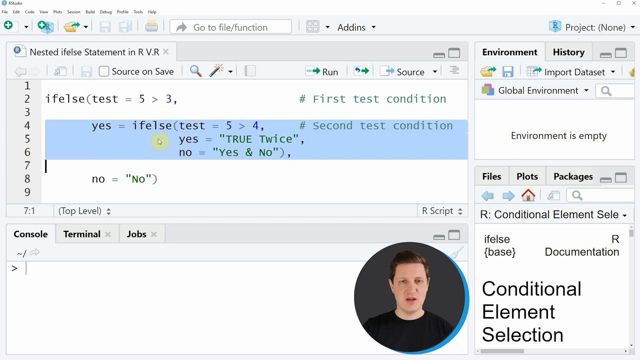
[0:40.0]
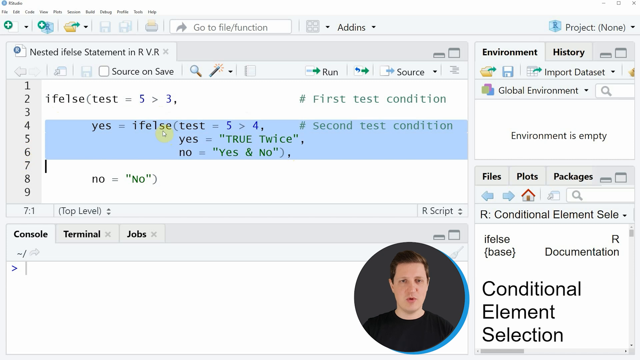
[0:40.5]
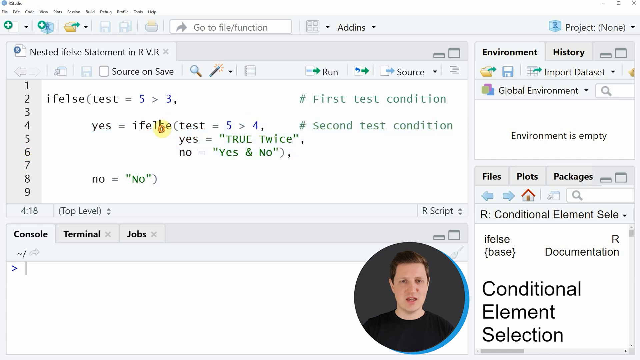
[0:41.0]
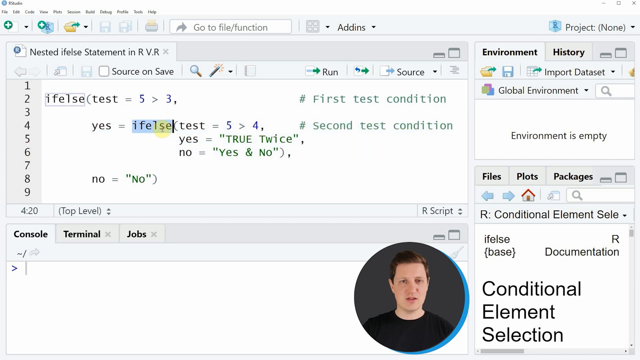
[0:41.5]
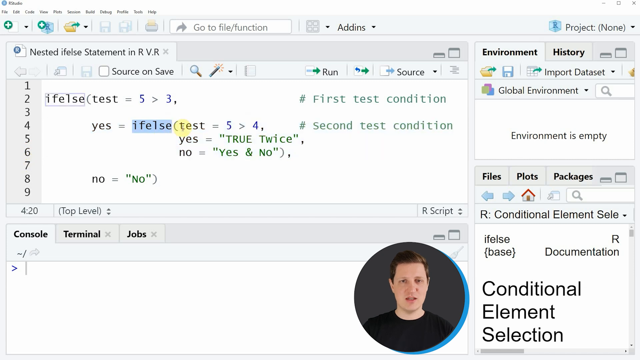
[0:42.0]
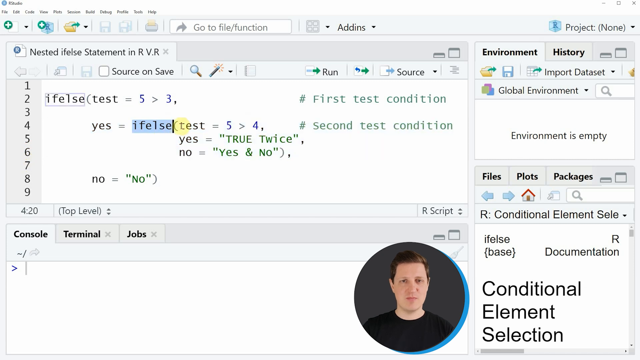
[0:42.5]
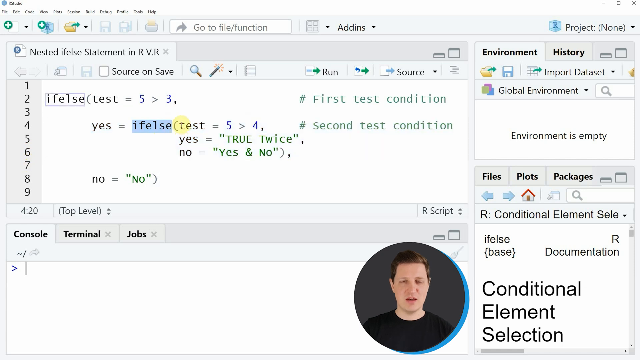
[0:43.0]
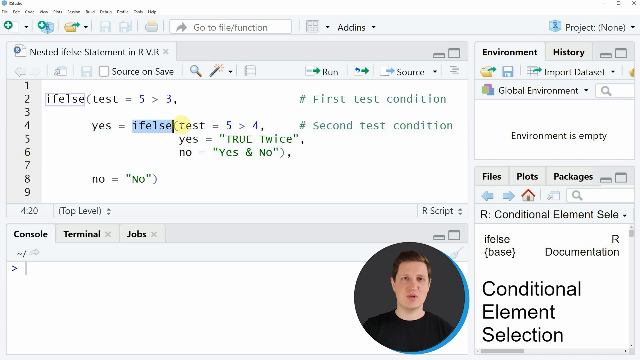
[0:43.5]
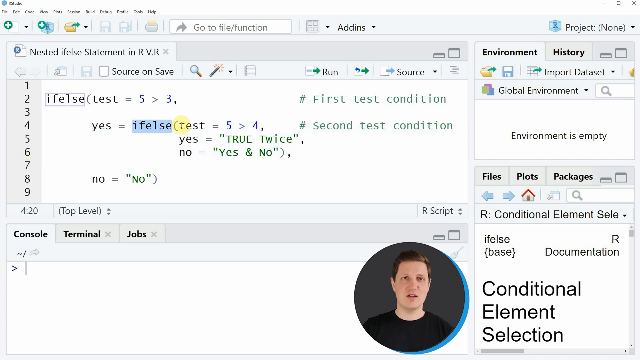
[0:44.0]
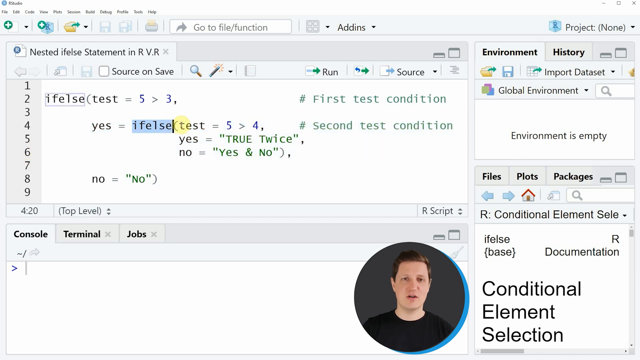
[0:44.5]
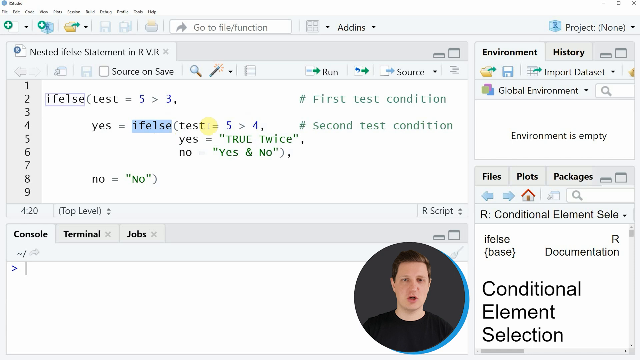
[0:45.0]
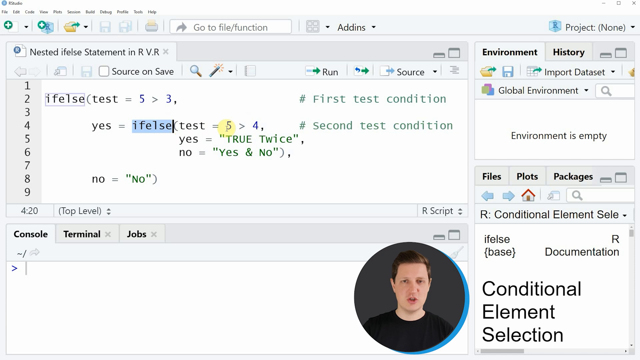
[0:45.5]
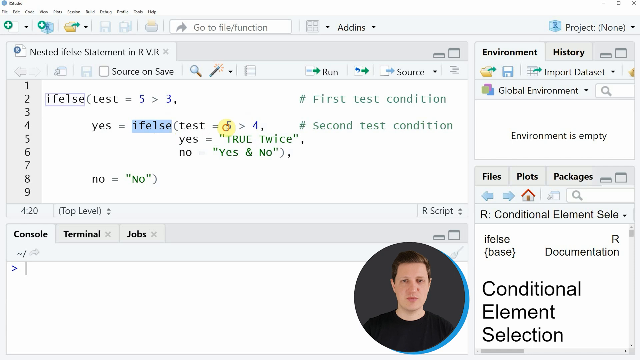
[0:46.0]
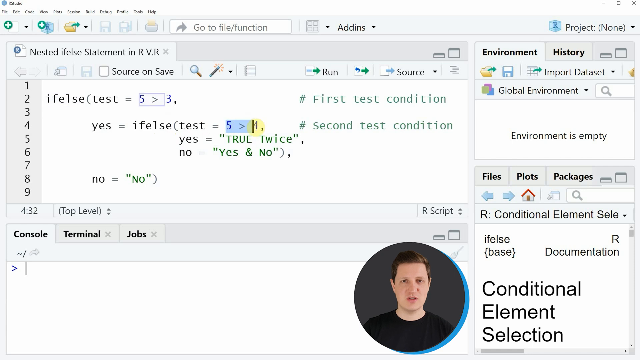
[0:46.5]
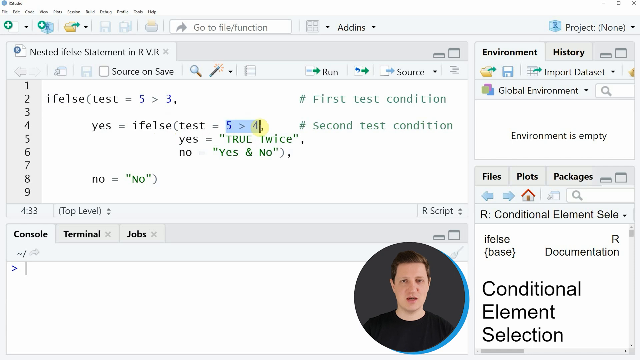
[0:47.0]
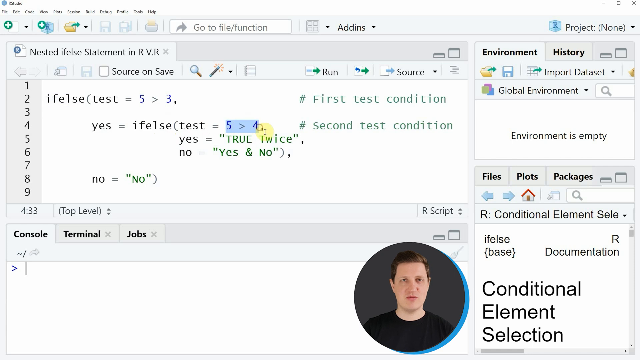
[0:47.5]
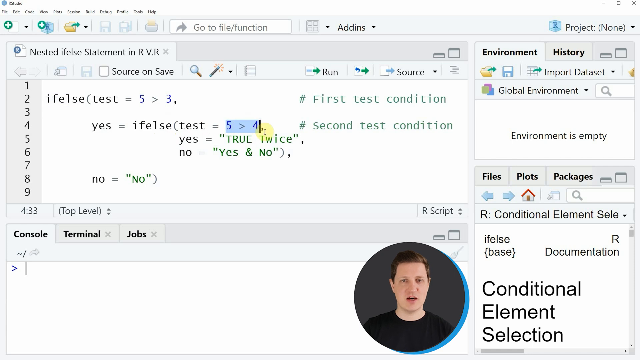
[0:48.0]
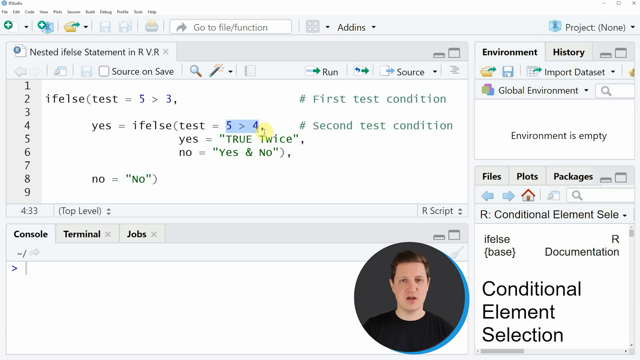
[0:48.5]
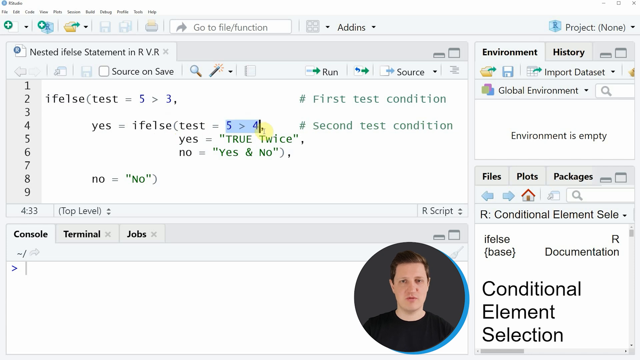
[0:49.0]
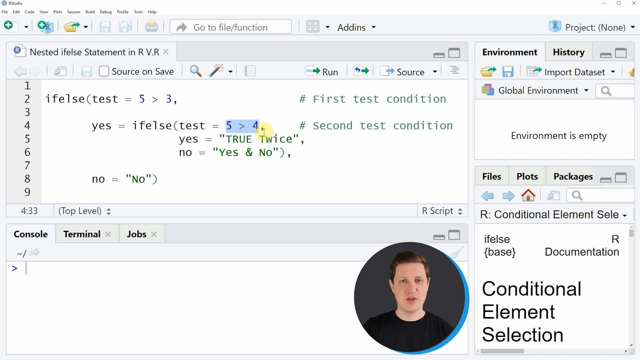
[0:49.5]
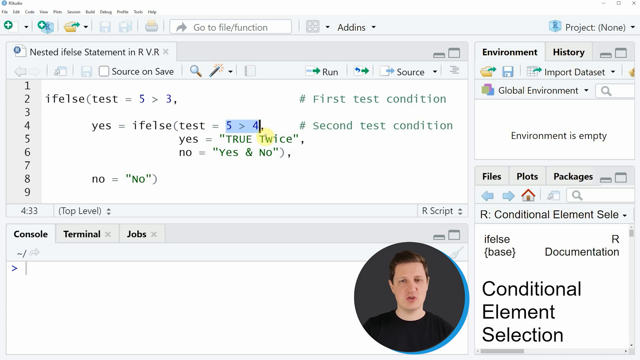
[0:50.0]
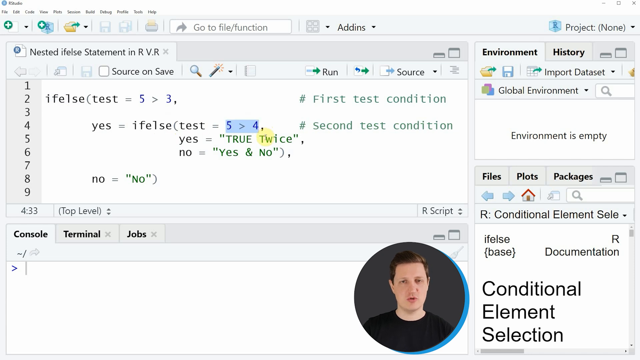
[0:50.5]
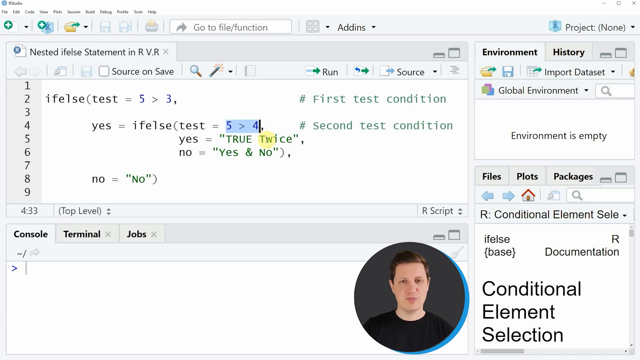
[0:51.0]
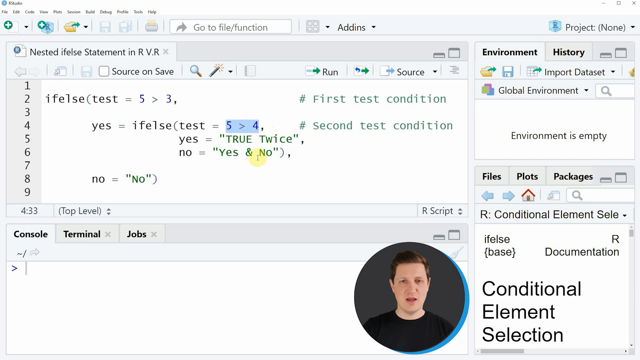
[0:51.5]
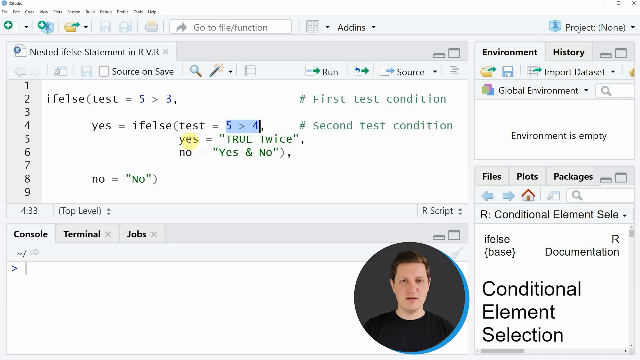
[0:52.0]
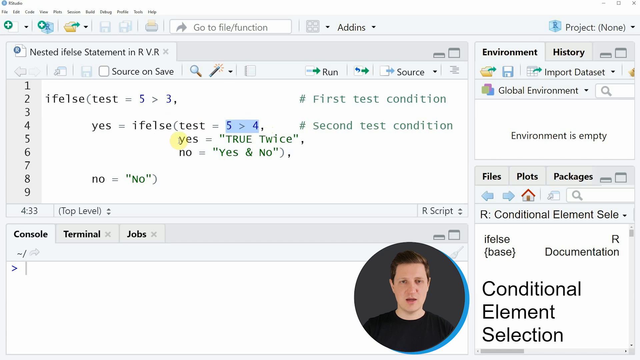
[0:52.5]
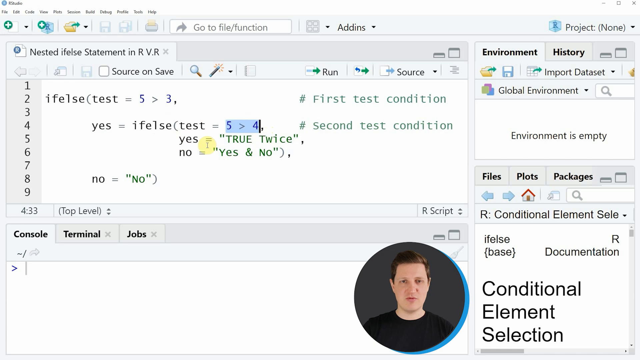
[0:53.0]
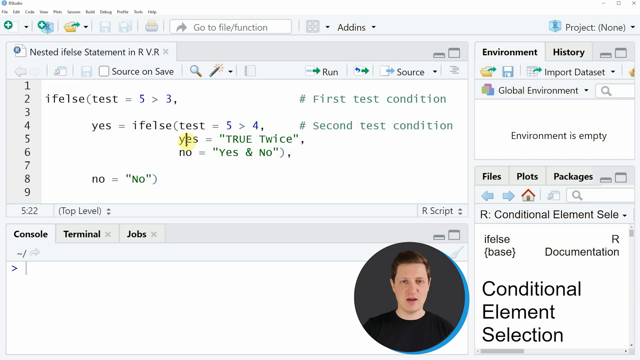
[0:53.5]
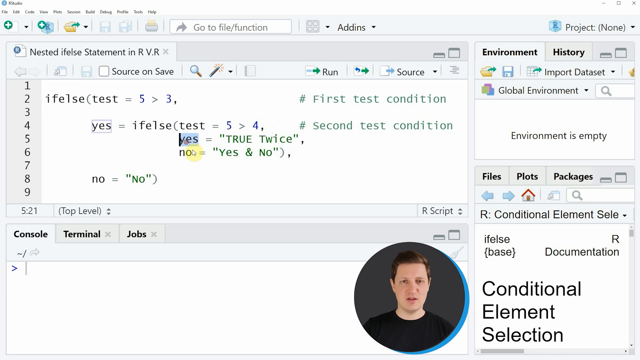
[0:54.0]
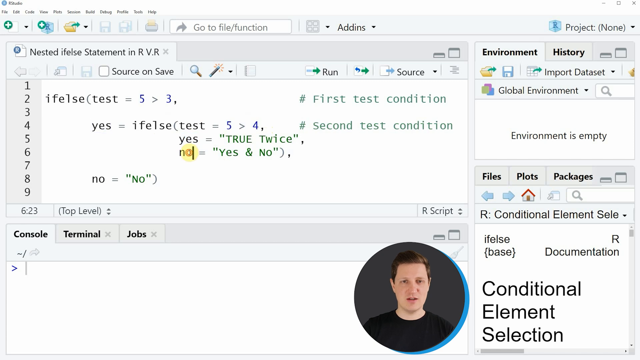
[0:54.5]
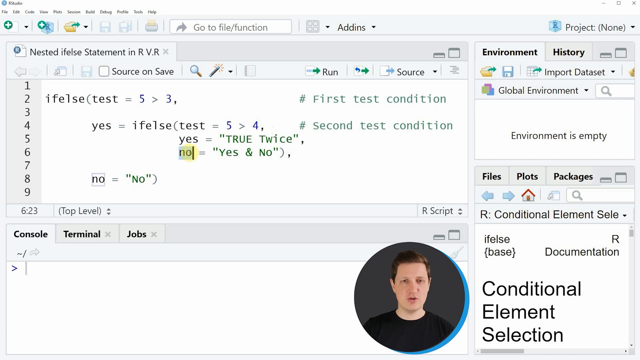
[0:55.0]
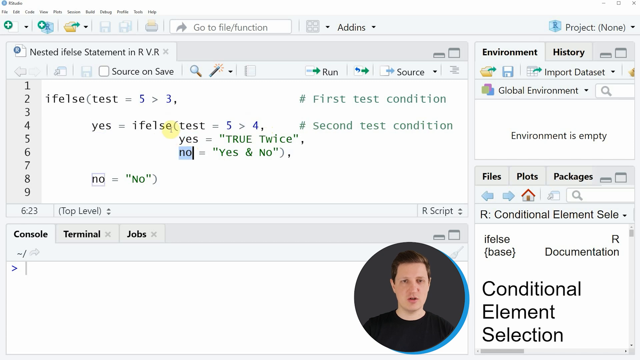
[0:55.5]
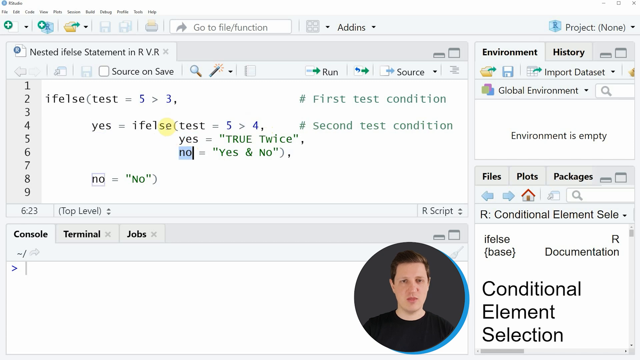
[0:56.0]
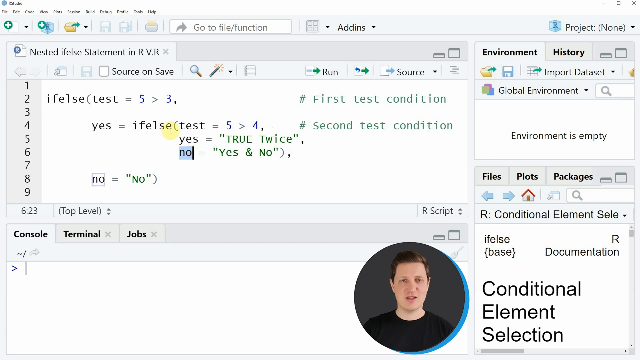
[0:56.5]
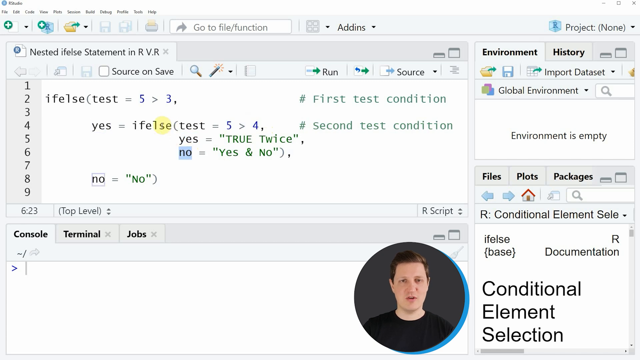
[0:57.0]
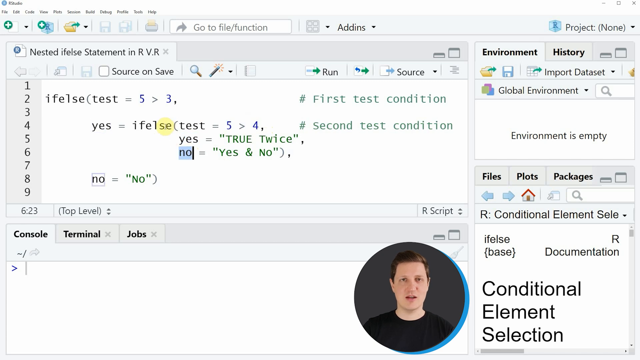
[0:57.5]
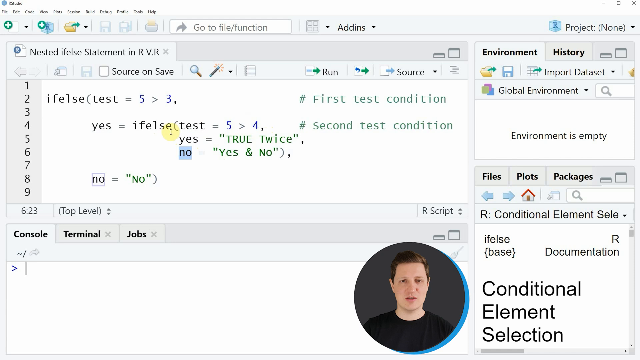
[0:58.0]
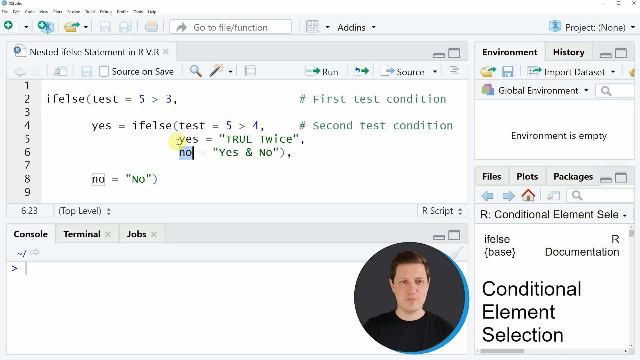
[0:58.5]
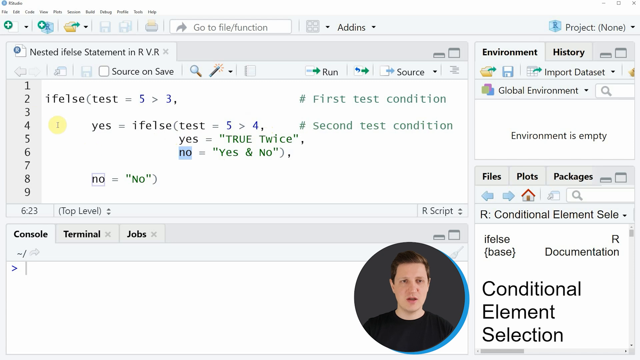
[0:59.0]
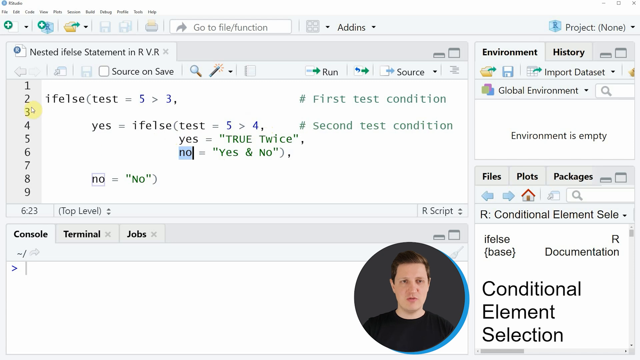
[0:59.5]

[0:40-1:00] In the left-hand panel, all of the text on lines 4, 5 and 6 is selected and highlighted in blue. The cursor, with its yellow circle highlight, selects the "ifelse" text on line 4. He kind of pauses, and the man is seen speaking in the circle frame at the bottom that shows his camera. The cursor then selects and highlights the text "5 > 4" on line 4 while he continues to speak. It quickly clicks just before the word "yes" on line 5, then goes down to line 6 and selects the word "no" to the left of the equal sign. The number 2 on the left side of the top left panel is clicked, and after that lines 4, 5 and 6 are highlighted in blue.